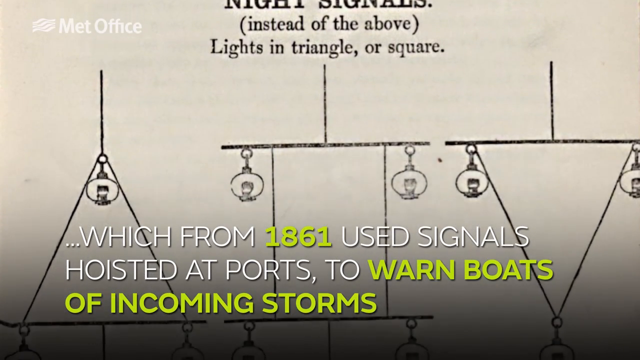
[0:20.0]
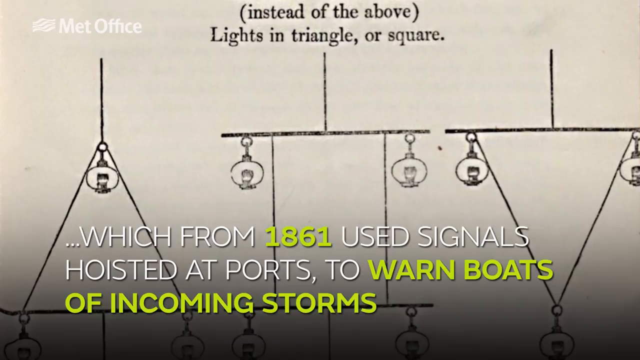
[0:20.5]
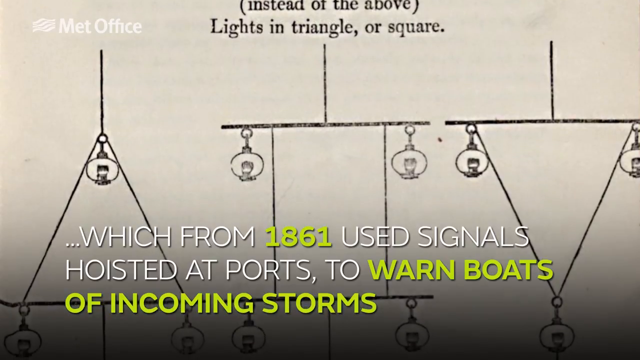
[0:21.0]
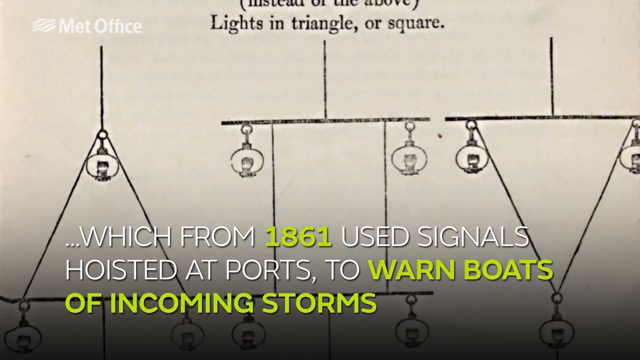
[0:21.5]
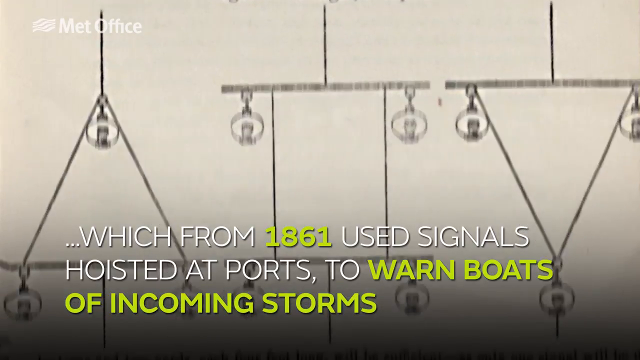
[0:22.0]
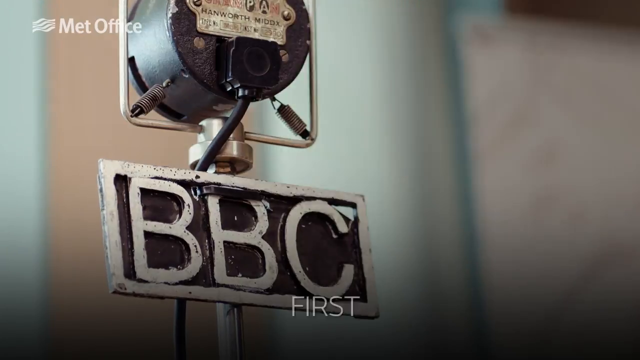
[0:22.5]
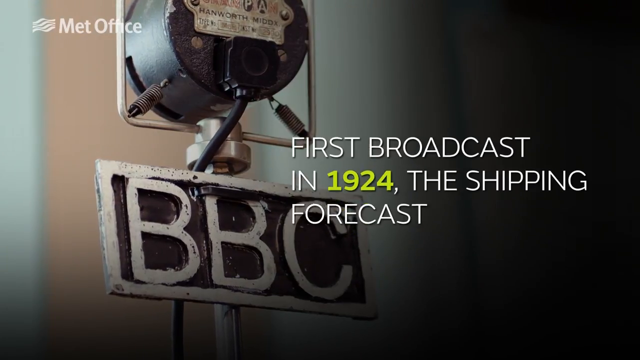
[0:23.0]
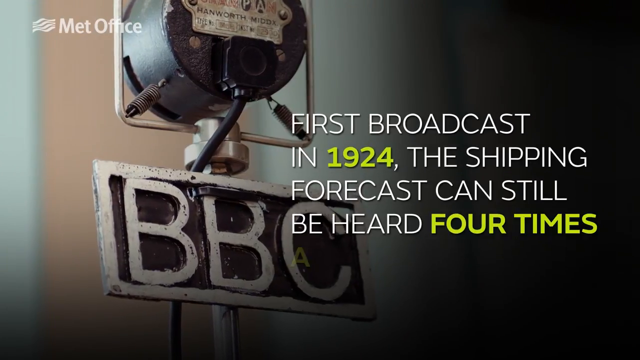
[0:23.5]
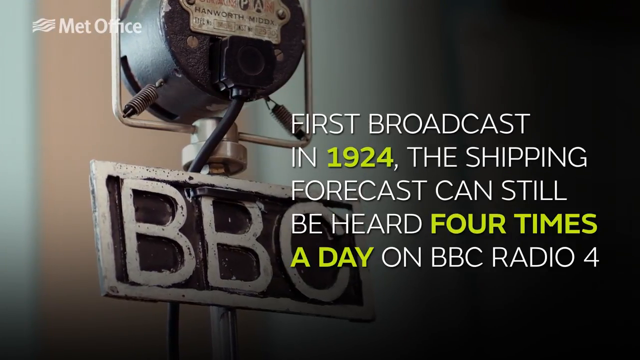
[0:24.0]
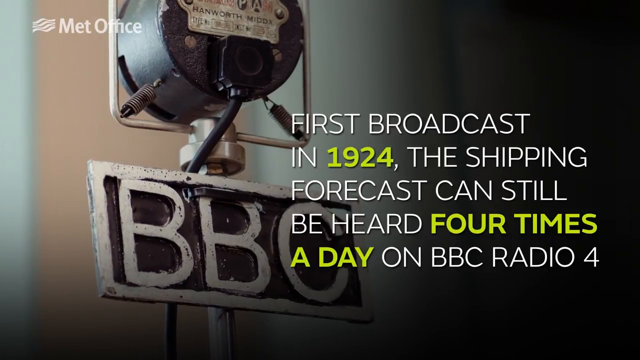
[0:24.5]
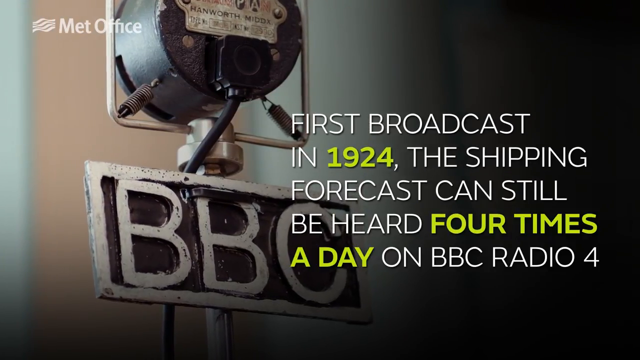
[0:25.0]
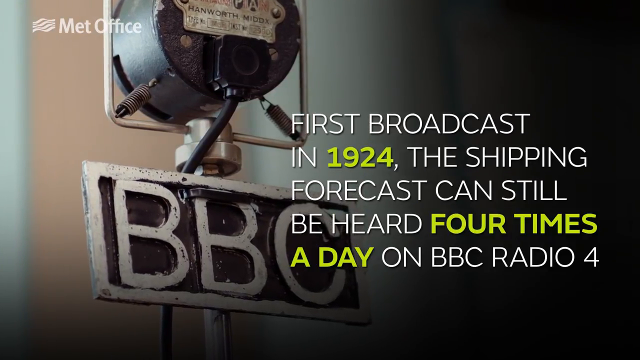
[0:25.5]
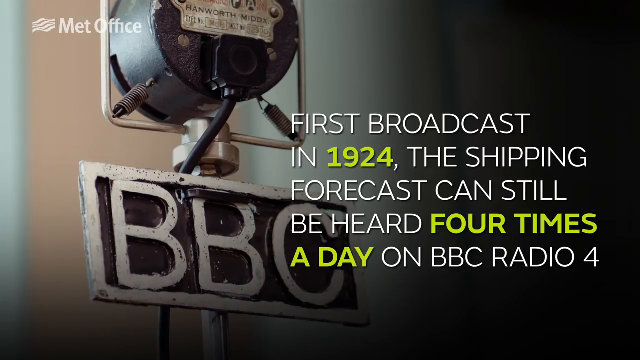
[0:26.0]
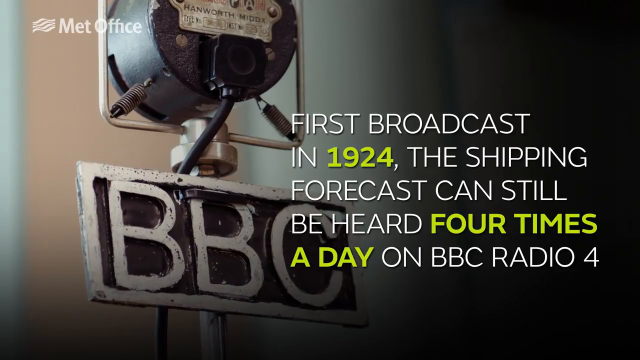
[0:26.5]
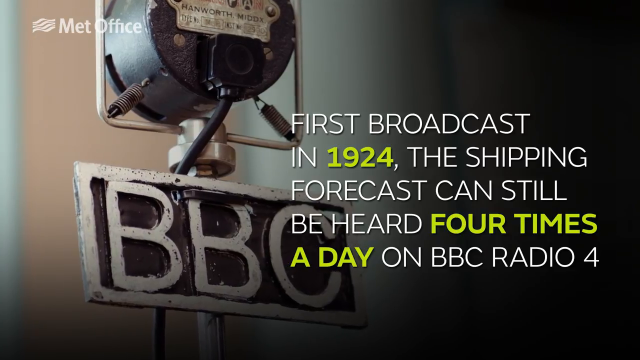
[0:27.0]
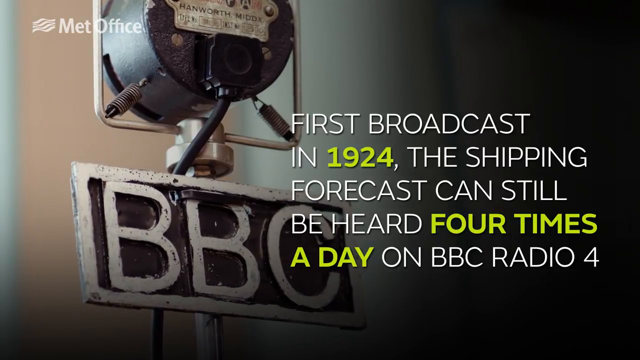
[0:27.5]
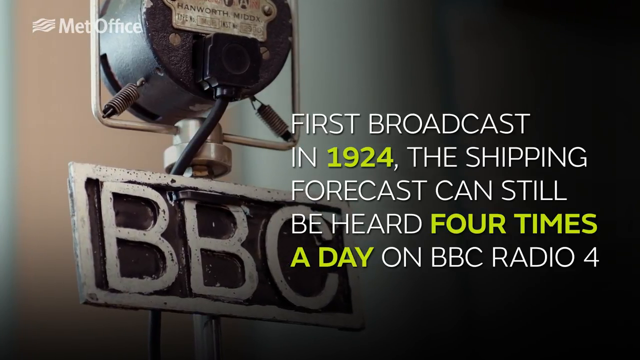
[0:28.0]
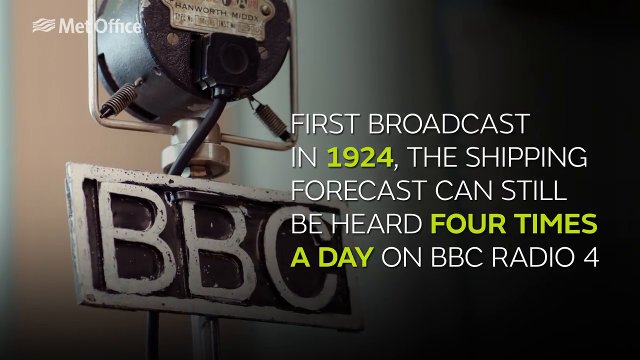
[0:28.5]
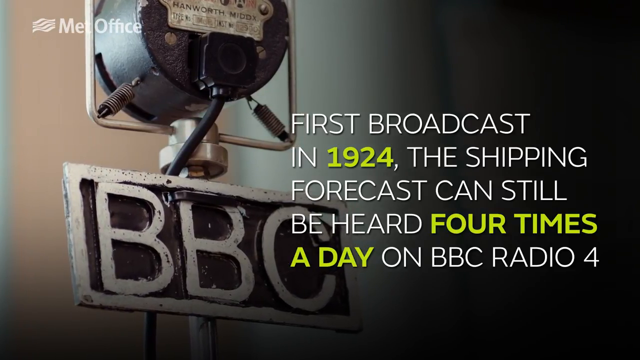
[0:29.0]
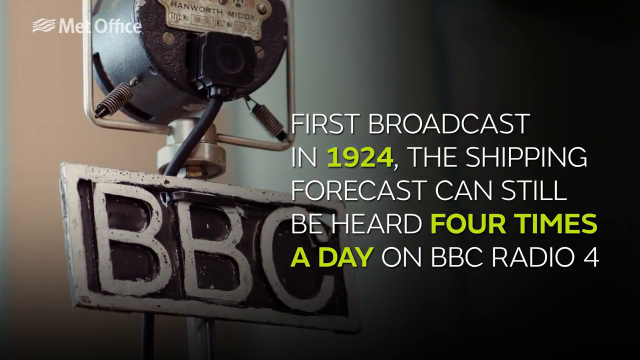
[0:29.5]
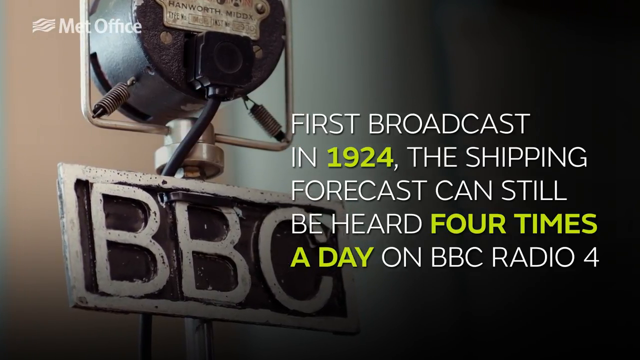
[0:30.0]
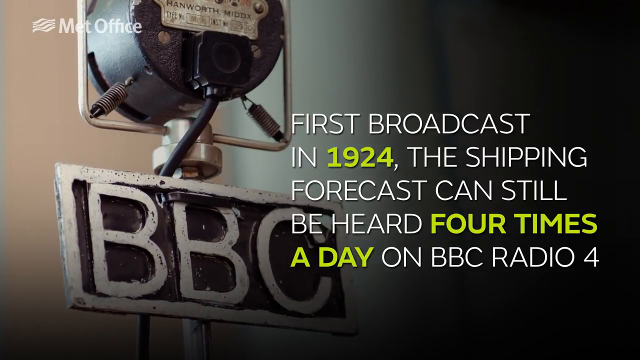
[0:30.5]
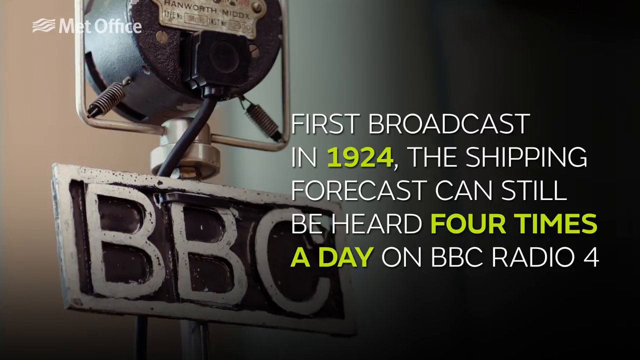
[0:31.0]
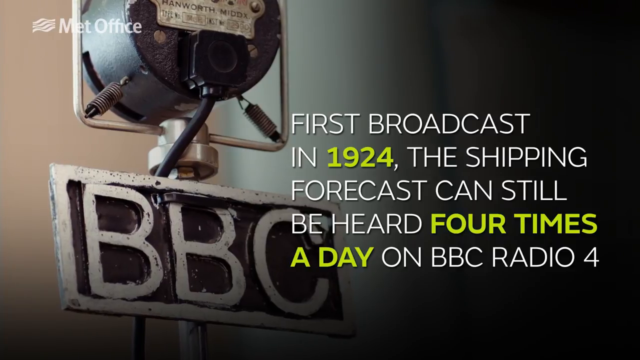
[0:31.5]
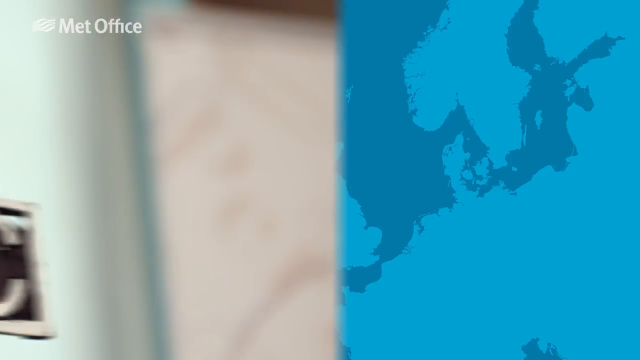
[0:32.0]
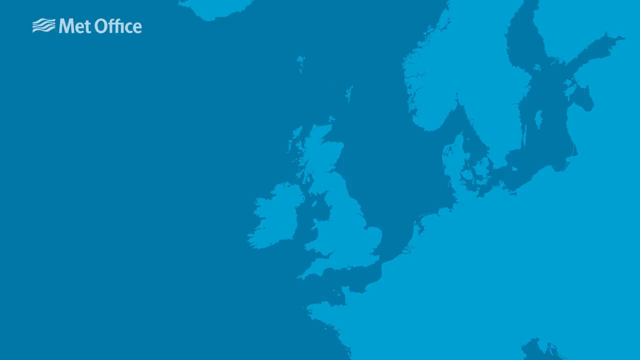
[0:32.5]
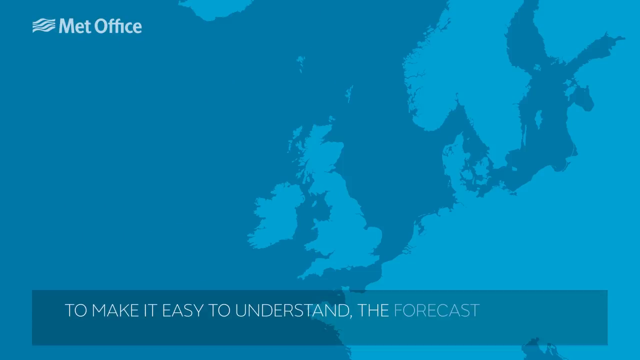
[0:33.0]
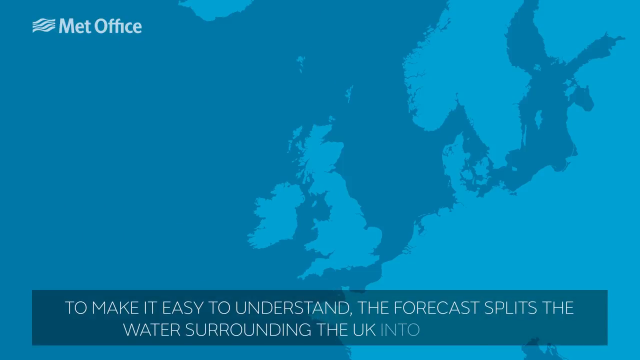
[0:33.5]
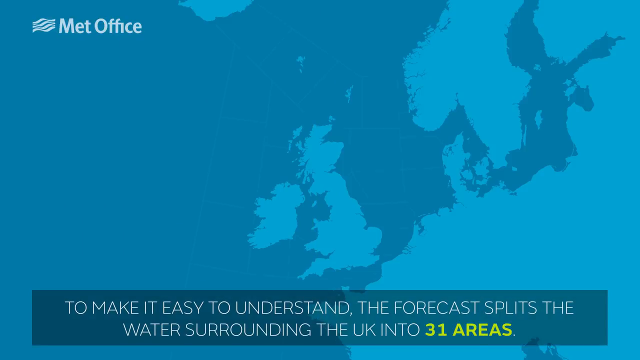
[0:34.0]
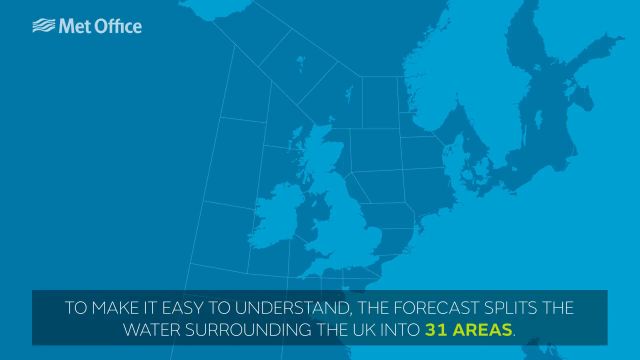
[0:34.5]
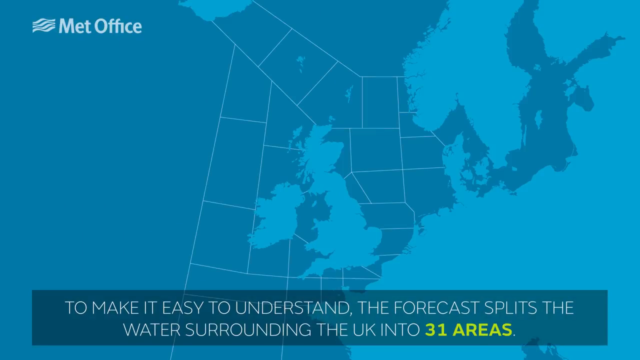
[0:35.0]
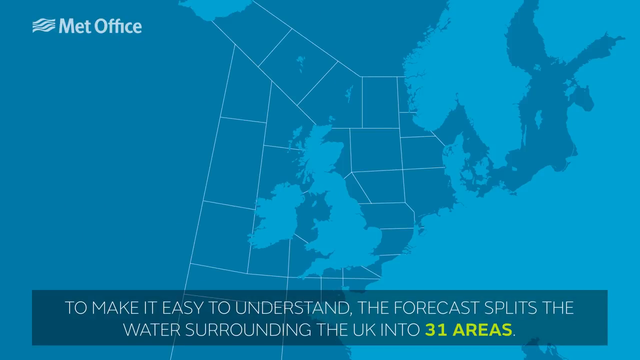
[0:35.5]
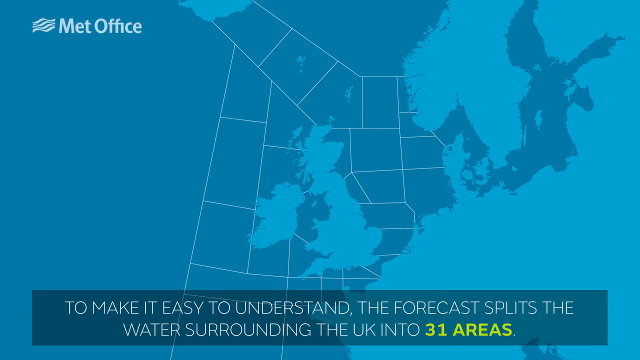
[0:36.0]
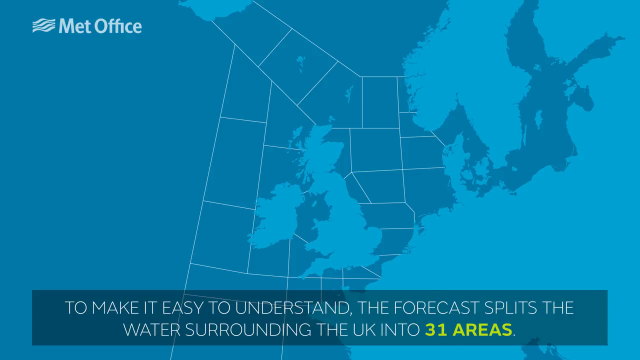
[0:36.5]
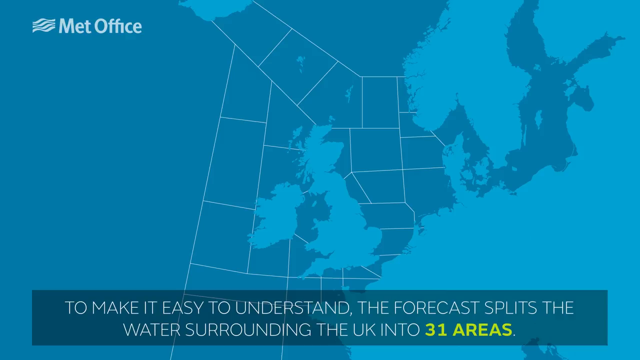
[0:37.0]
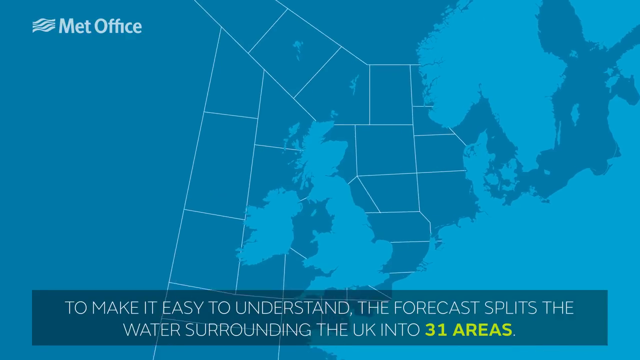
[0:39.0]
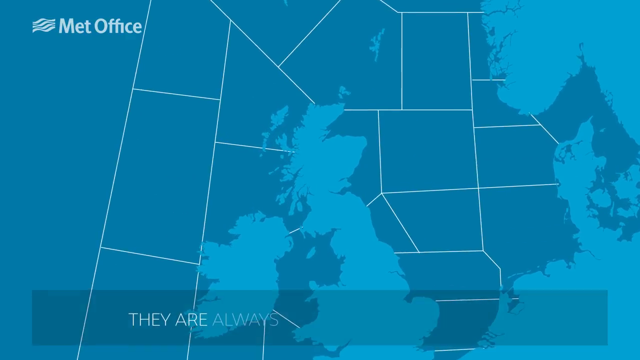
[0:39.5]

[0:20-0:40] More text appears, stating that the broadcast began in 1924 and that "the shipping forecast can still be heard 4 times a day on BBC radio". Further text refers to signals from 1861 at ports warning of incoming storms. A machine with "BBC" written on it is shown; it looks like a bell. Text then reads "to make it easy to understand, the forecast splits the water surrounding the UK into 31 areas", followed by text saying they are always read in a set way.